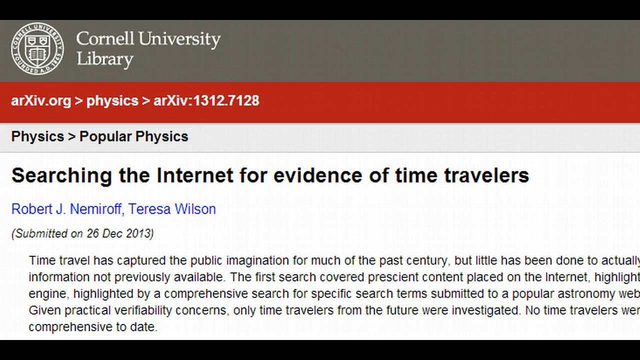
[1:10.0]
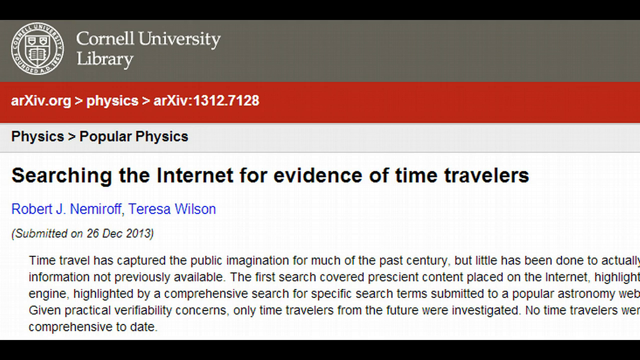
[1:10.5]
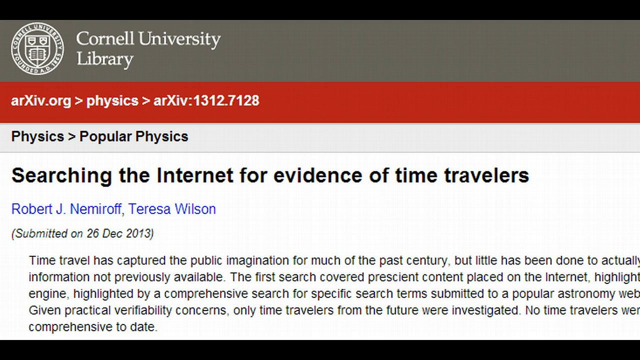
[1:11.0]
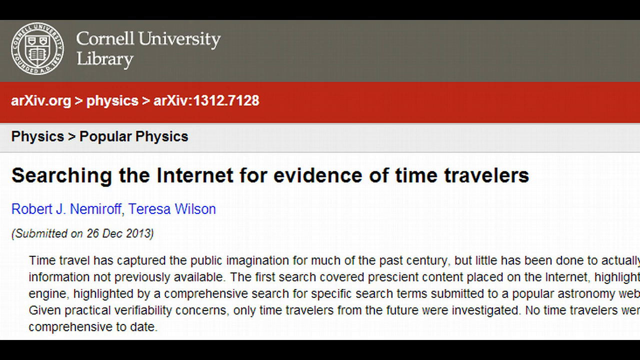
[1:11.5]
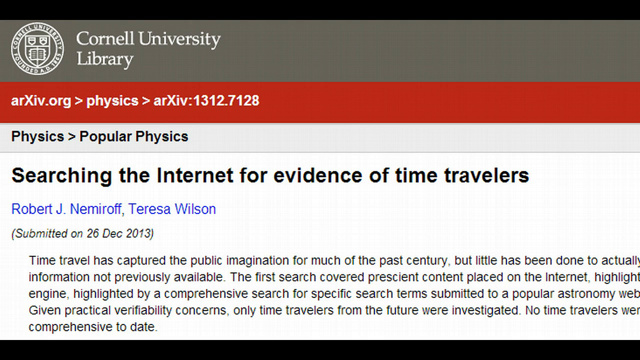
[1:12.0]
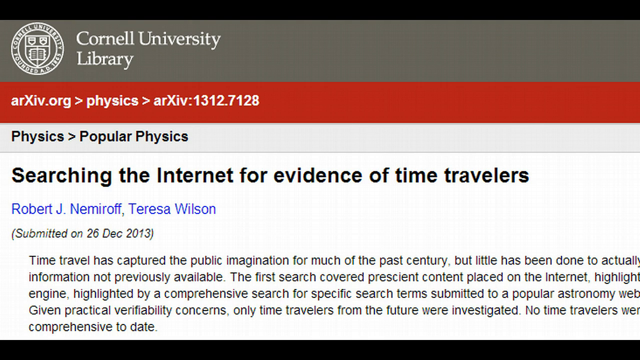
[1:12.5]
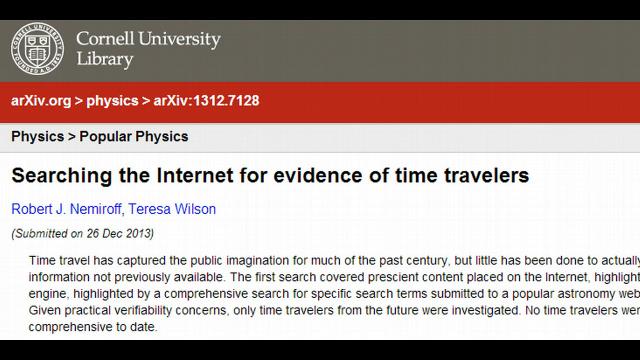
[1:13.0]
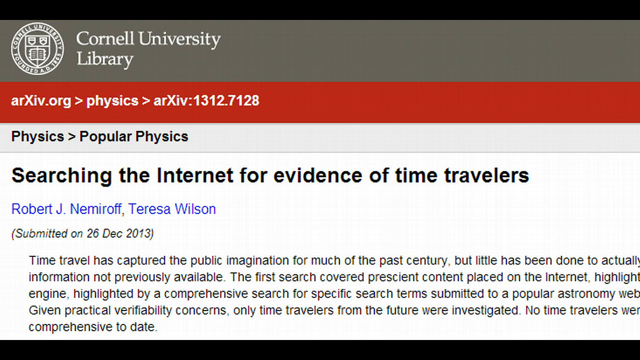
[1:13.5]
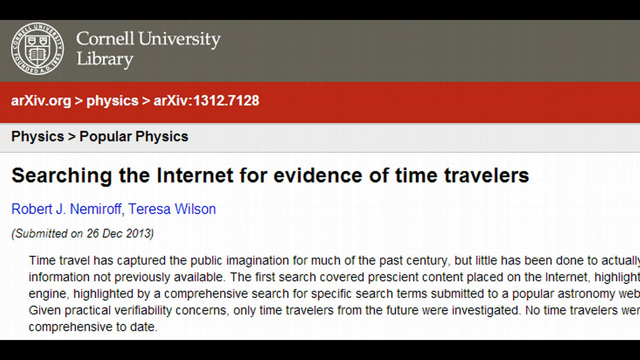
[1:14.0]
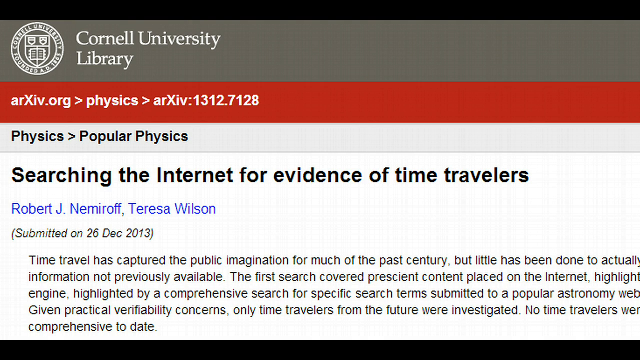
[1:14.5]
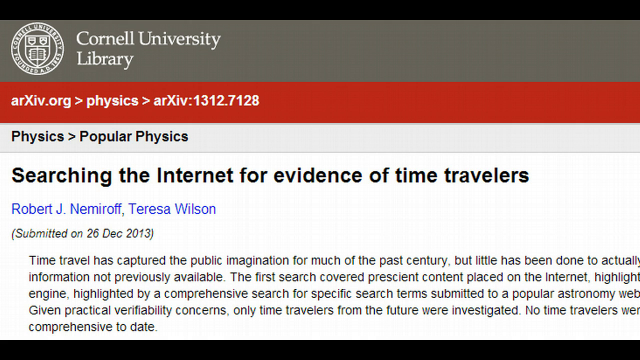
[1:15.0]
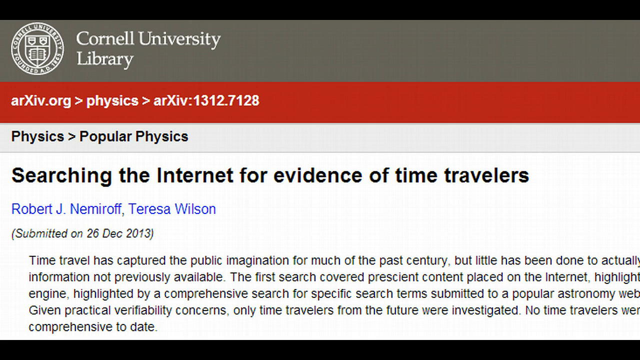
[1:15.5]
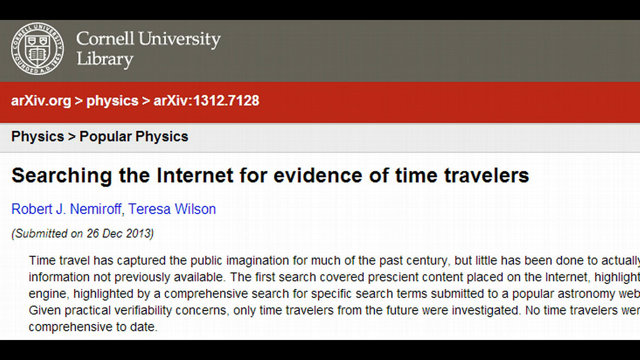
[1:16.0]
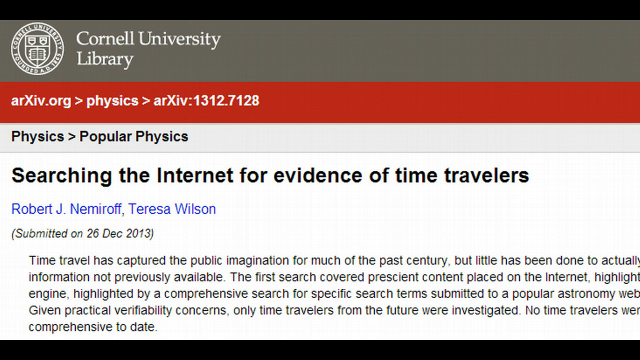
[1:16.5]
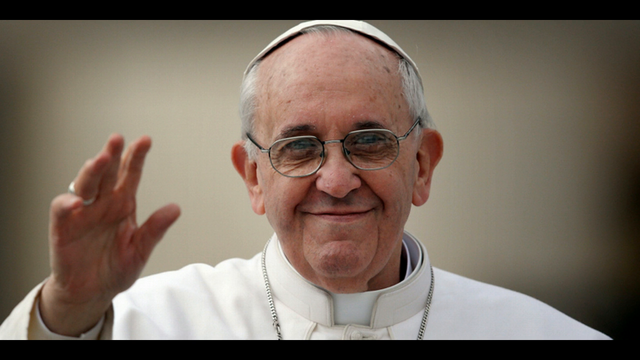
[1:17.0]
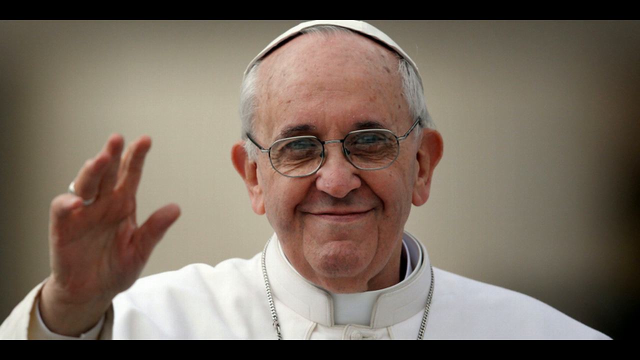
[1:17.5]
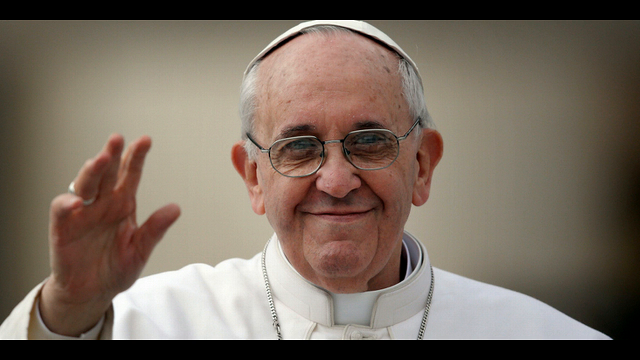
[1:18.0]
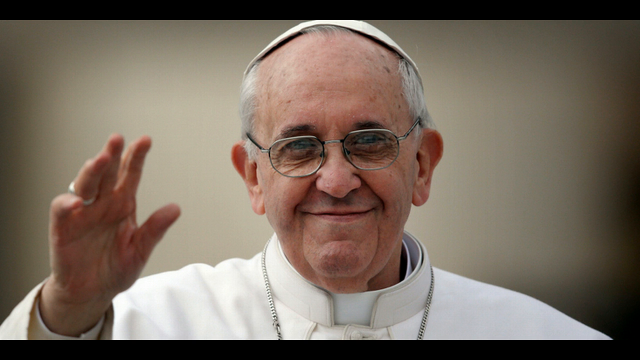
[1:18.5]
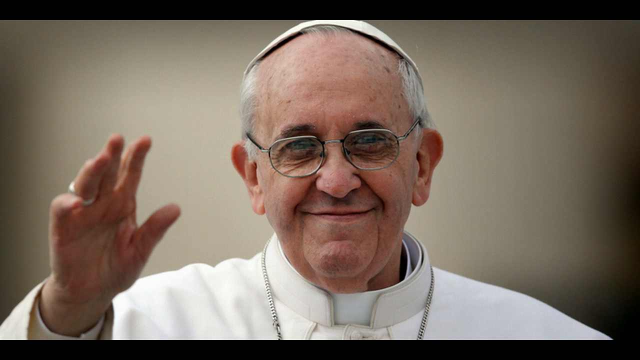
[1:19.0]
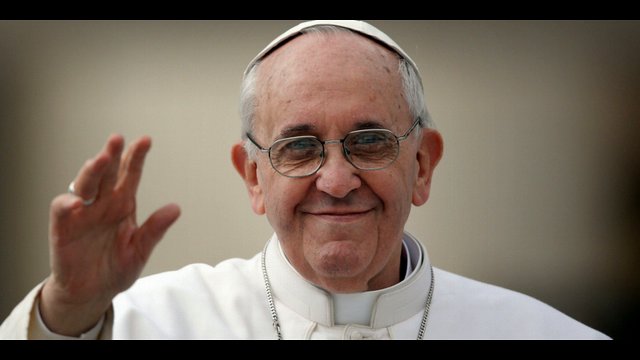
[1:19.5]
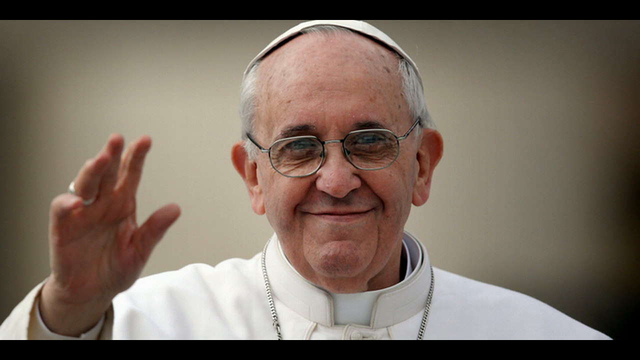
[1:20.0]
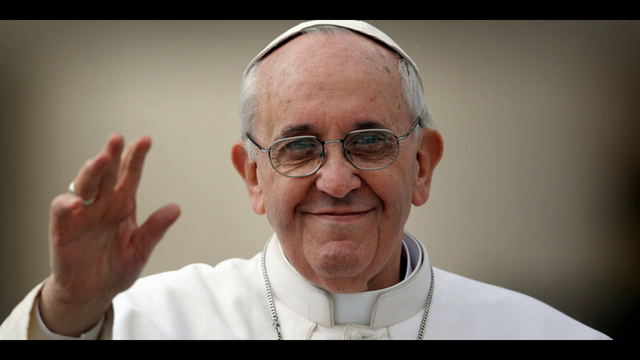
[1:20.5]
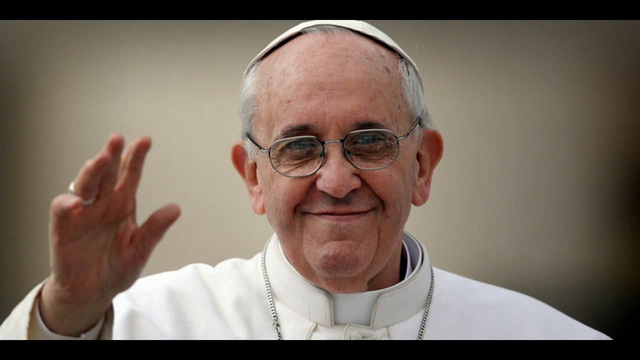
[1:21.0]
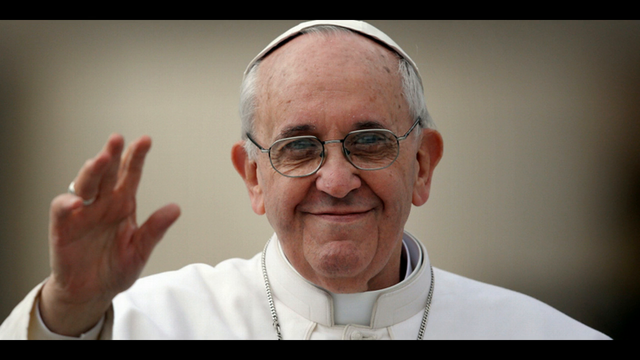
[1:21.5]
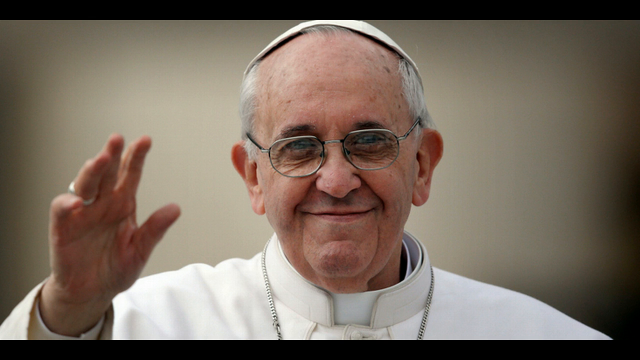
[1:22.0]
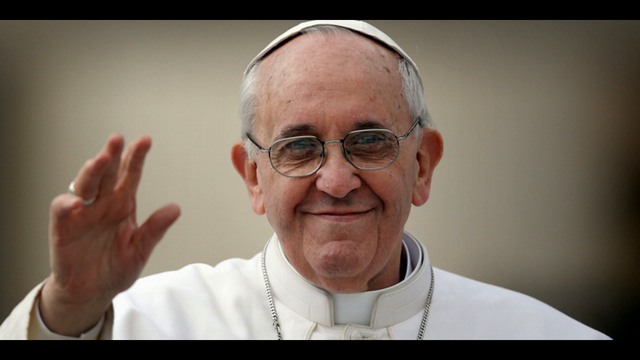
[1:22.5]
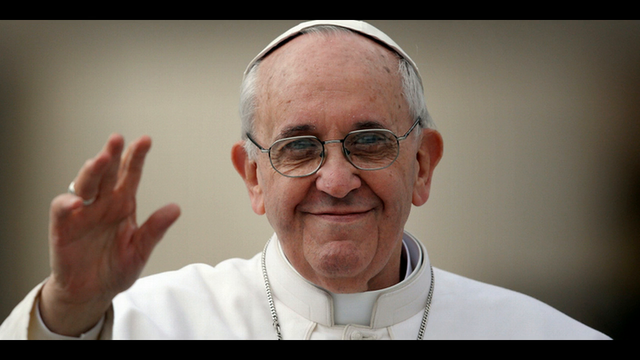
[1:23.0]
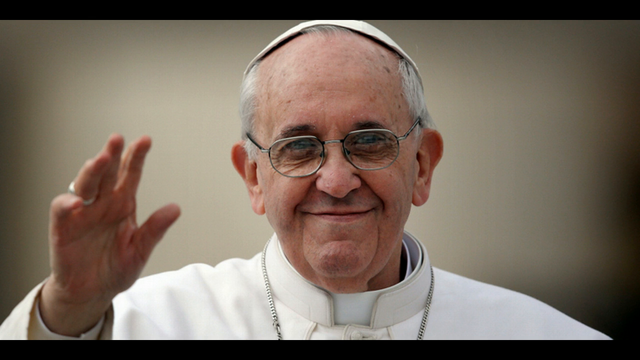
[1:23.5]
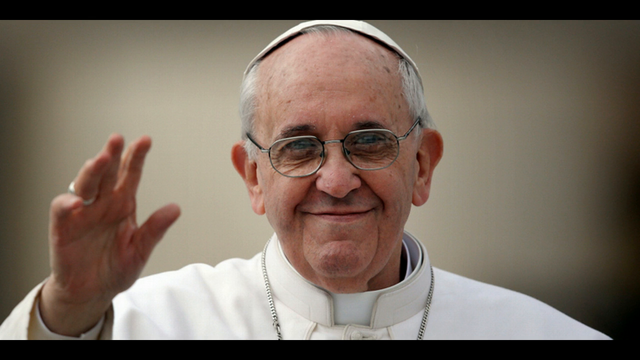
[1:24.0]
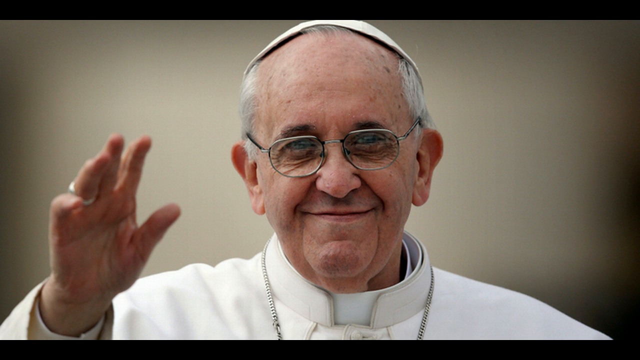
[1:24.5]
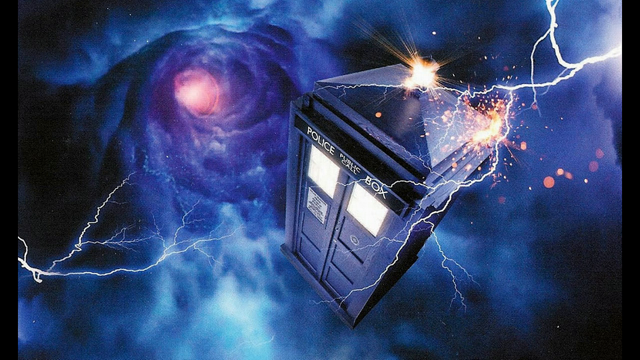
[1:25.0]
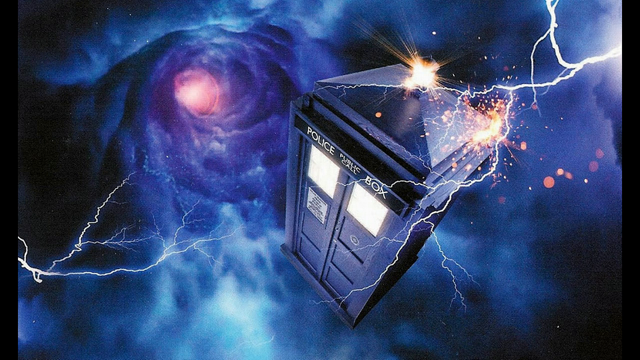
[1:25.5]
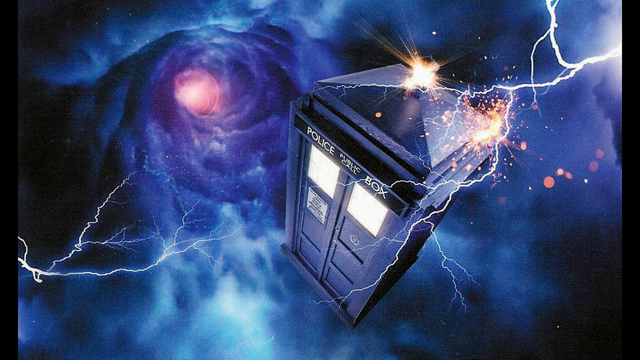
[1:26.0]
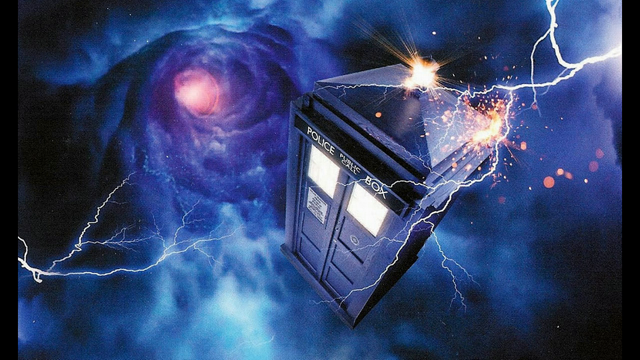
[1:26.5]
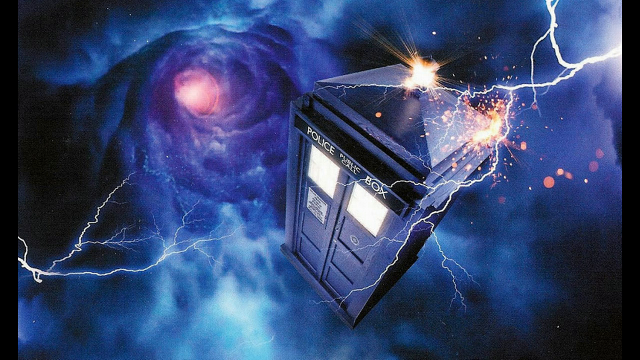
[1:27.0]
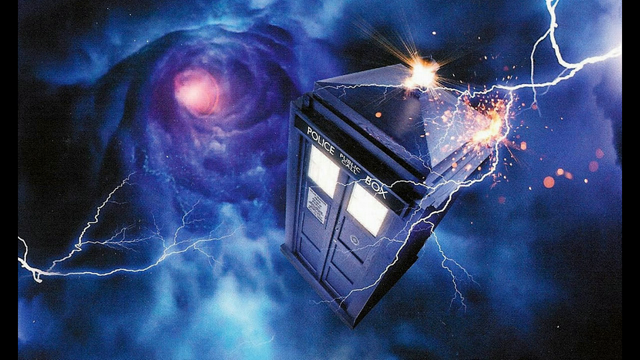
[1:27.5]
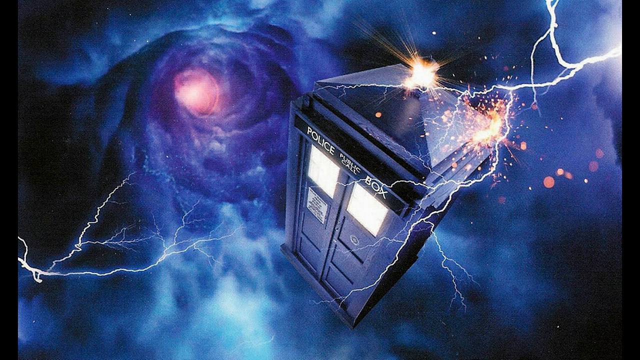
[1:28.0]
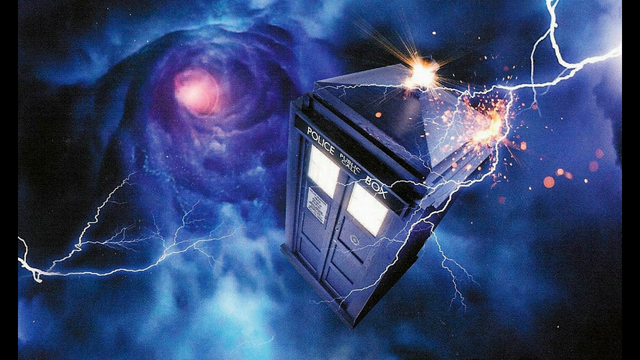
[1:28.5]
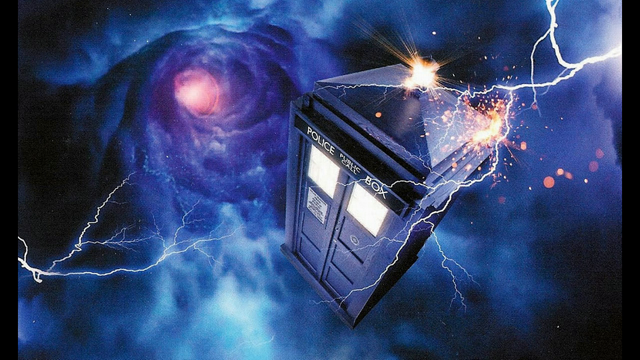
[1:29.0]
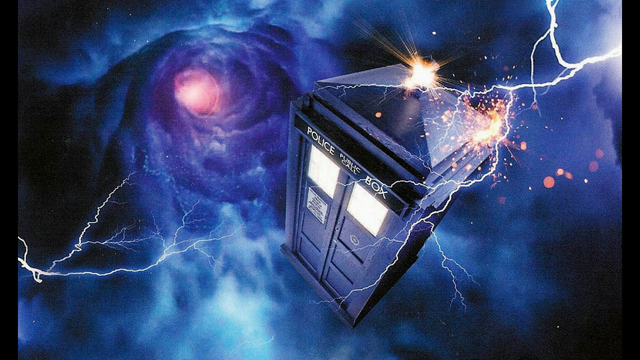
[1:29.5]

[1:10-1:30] The article "Searching the Internet for Evidence of Time Travelers" from the Cornell University Library remains on screen. After a few seconds, an image of the Pope before Pope Francis appears. He wears glasses and the usual papal outfit, smiles at the camera with his hand raised, and appears to be barely elderly. The last image shows the police public call box from the show Doctor Who. In the background it seems to be going through a black hole of some sort as it travels to a different time. The image is very blue, with purple in the middle and an orange part representing the black hole, and lightning strikes the police box.